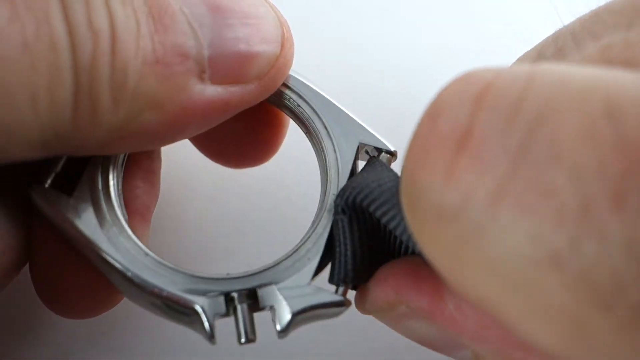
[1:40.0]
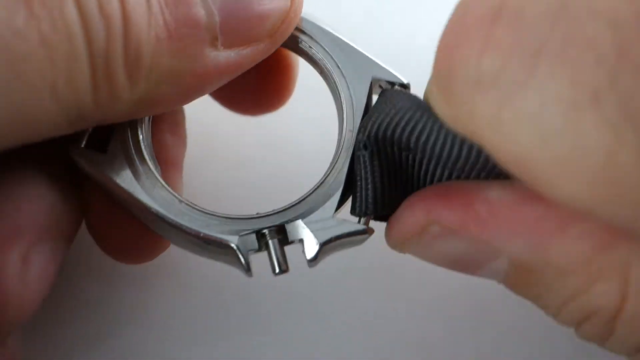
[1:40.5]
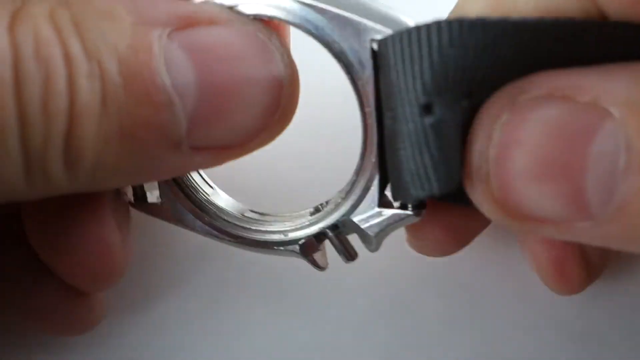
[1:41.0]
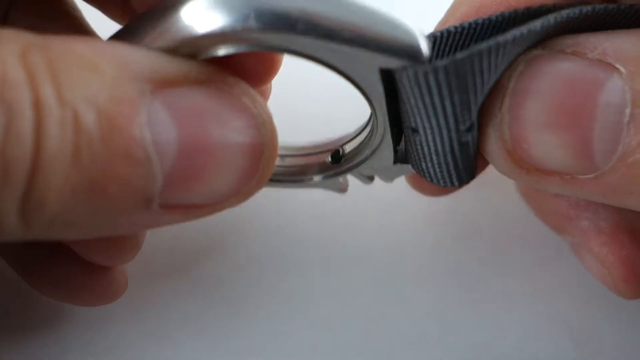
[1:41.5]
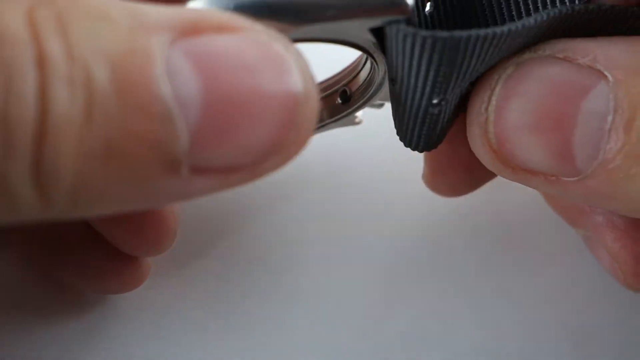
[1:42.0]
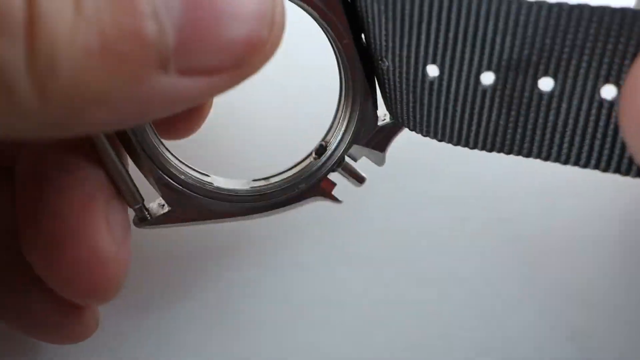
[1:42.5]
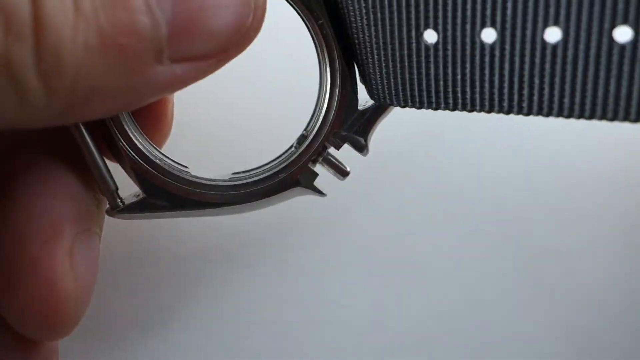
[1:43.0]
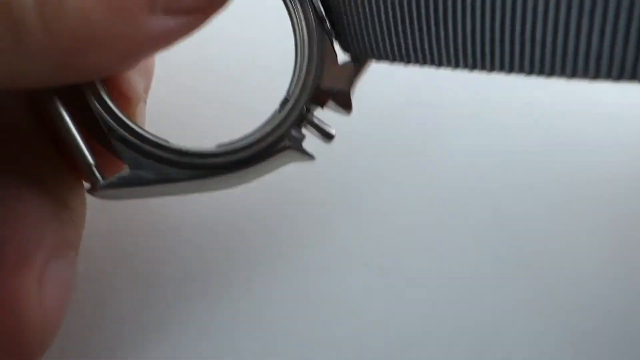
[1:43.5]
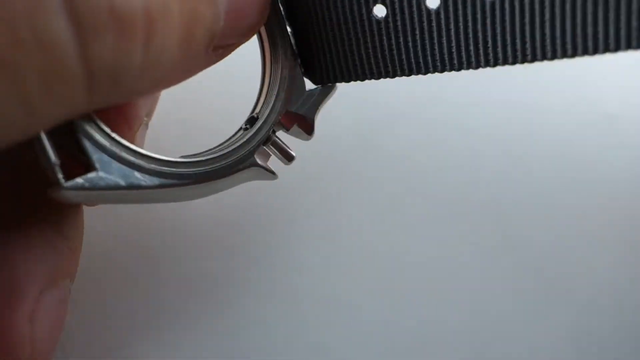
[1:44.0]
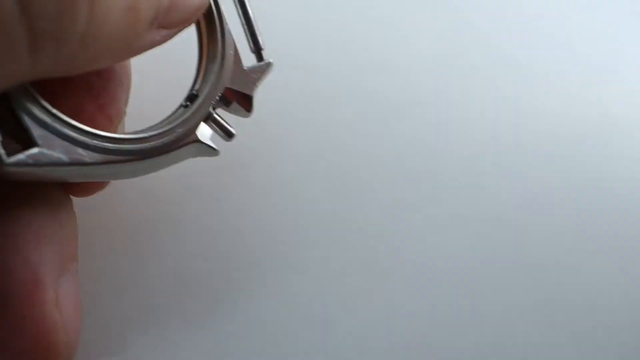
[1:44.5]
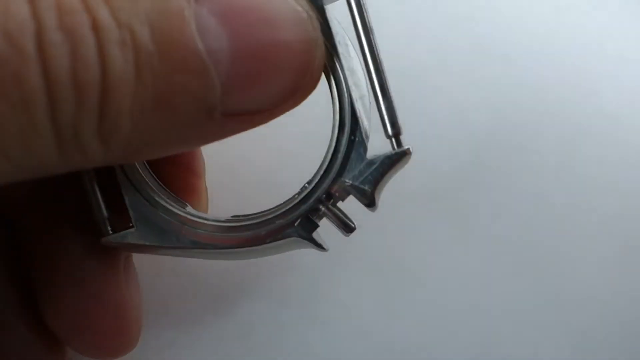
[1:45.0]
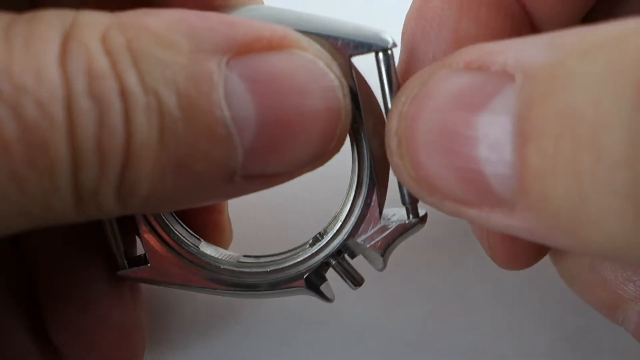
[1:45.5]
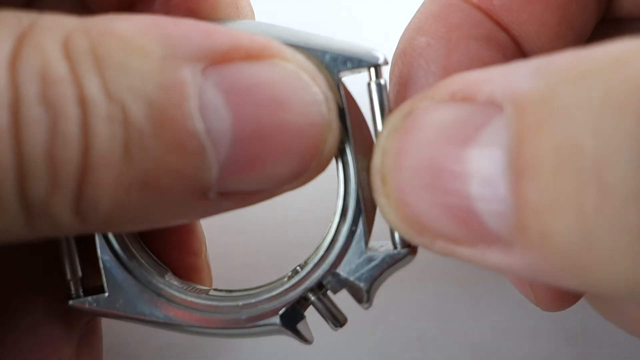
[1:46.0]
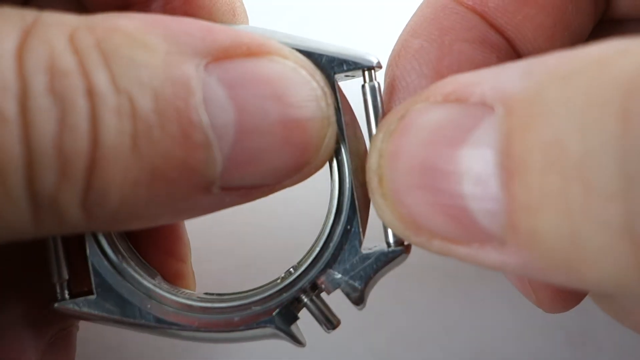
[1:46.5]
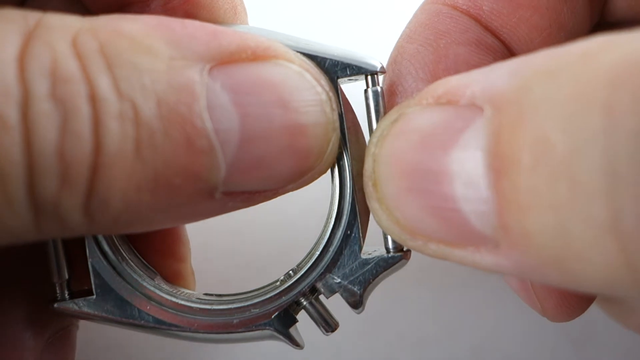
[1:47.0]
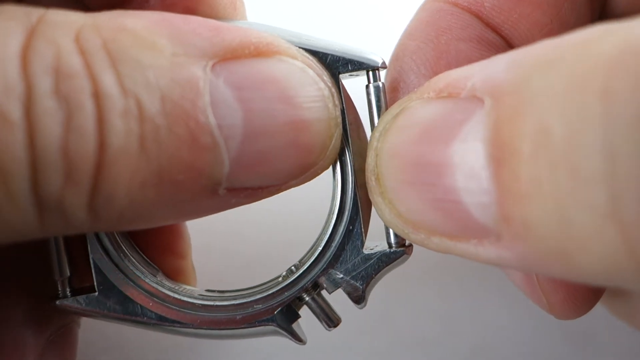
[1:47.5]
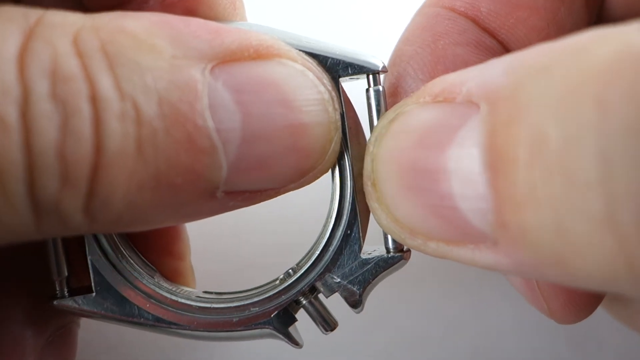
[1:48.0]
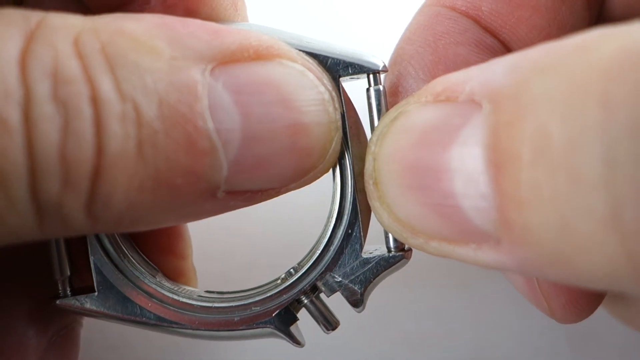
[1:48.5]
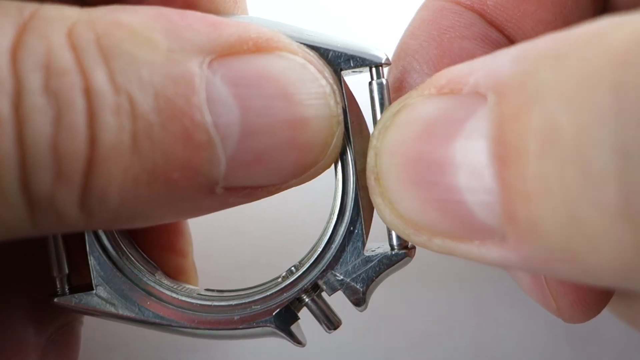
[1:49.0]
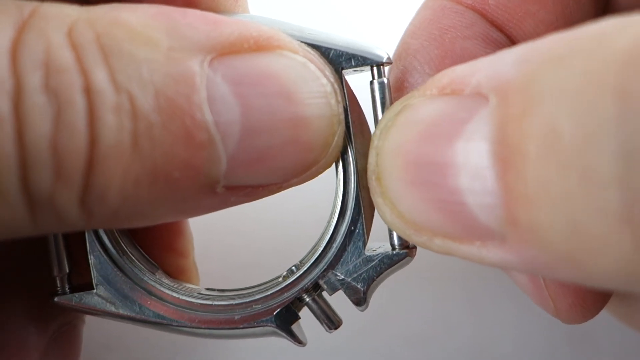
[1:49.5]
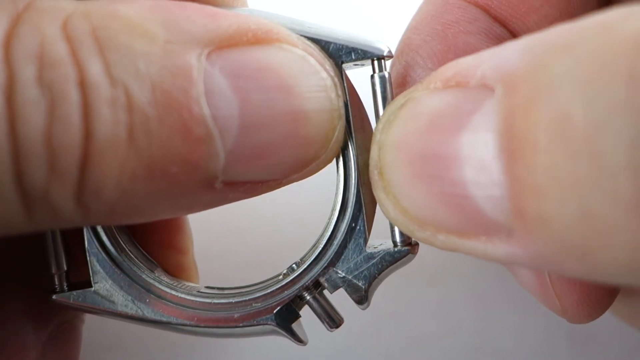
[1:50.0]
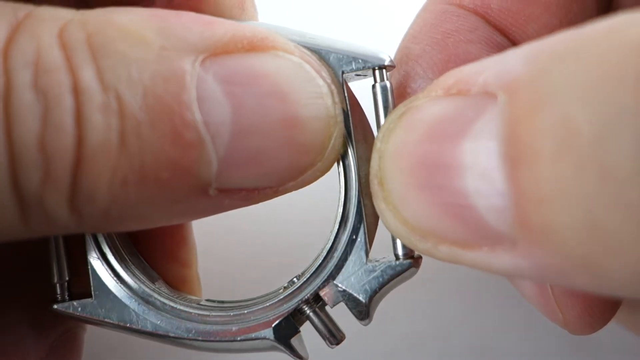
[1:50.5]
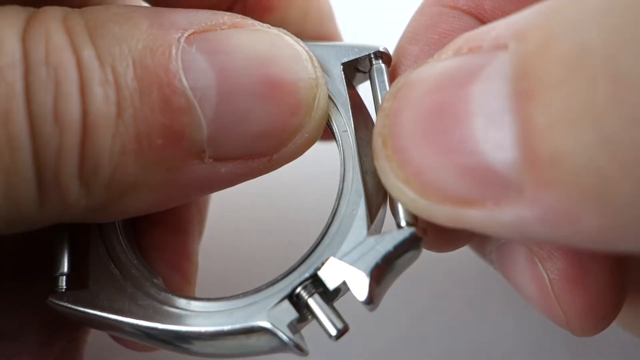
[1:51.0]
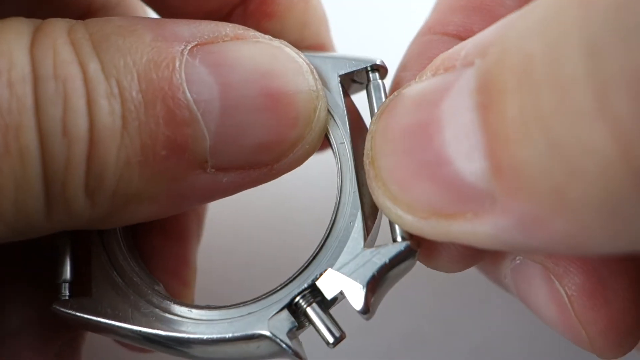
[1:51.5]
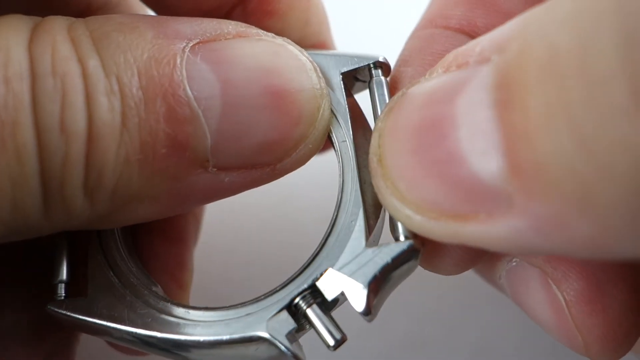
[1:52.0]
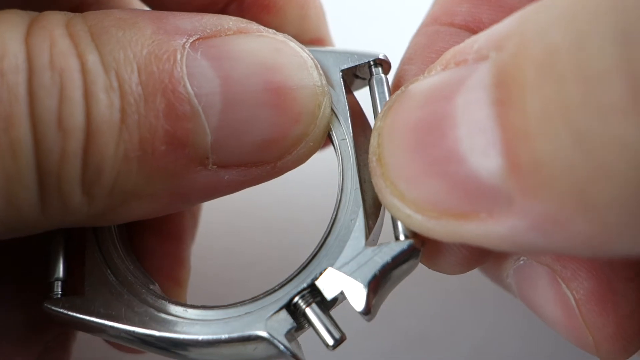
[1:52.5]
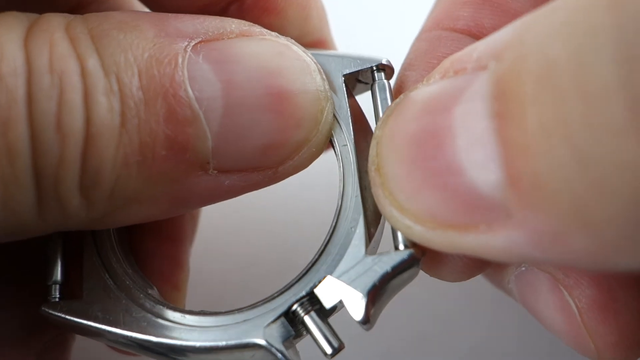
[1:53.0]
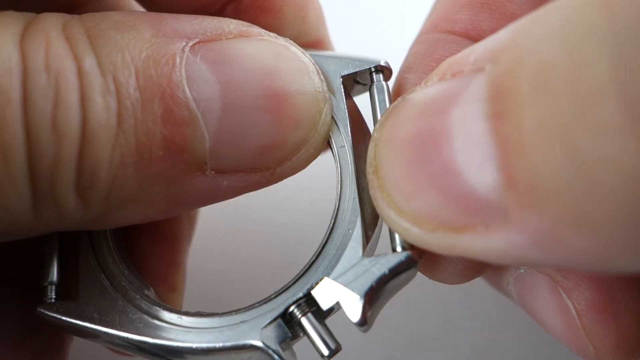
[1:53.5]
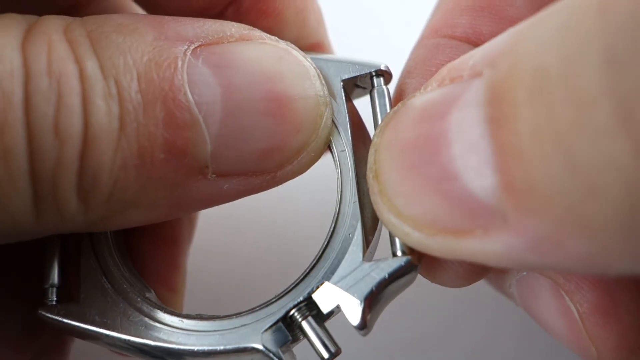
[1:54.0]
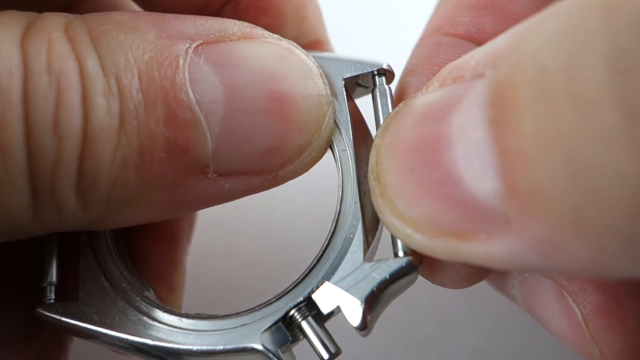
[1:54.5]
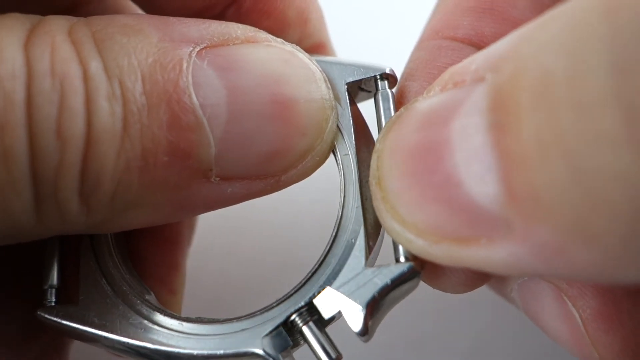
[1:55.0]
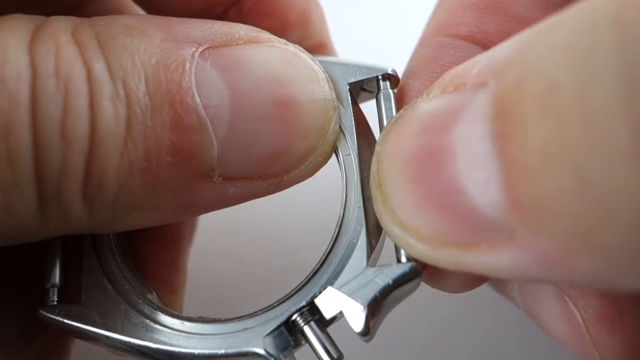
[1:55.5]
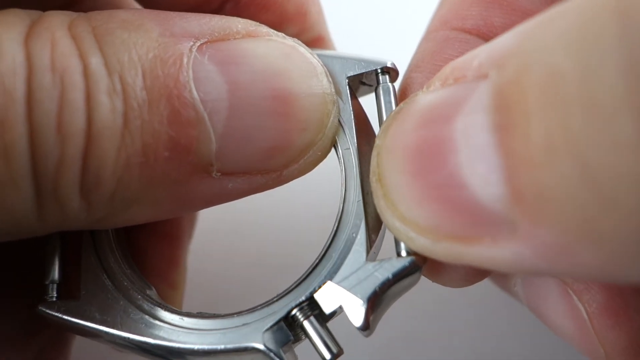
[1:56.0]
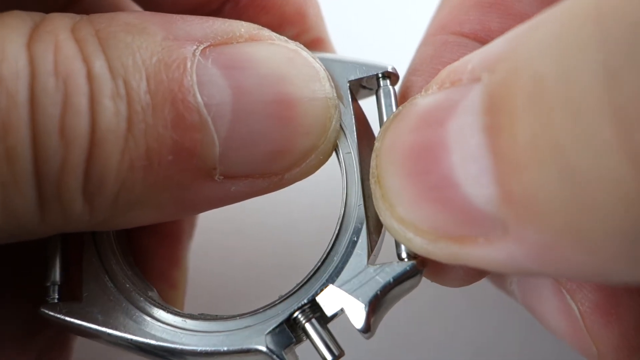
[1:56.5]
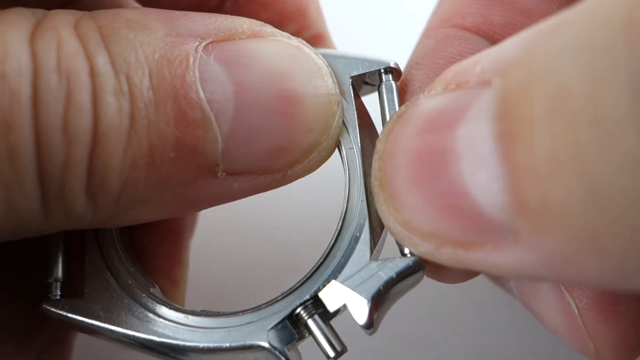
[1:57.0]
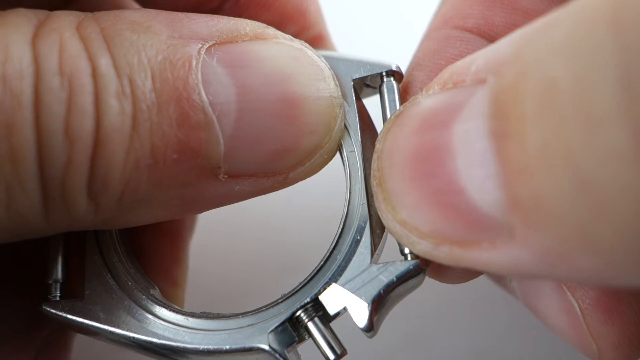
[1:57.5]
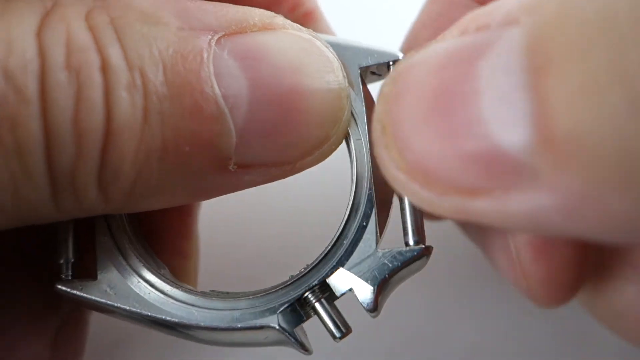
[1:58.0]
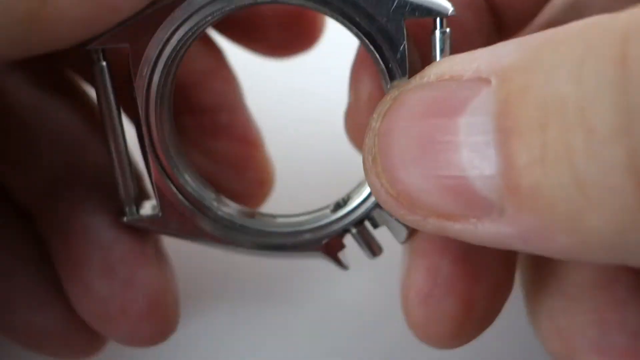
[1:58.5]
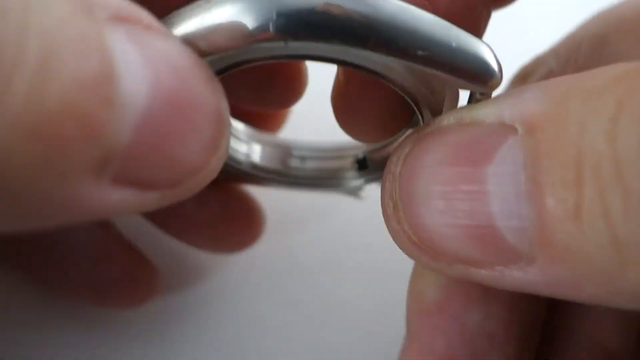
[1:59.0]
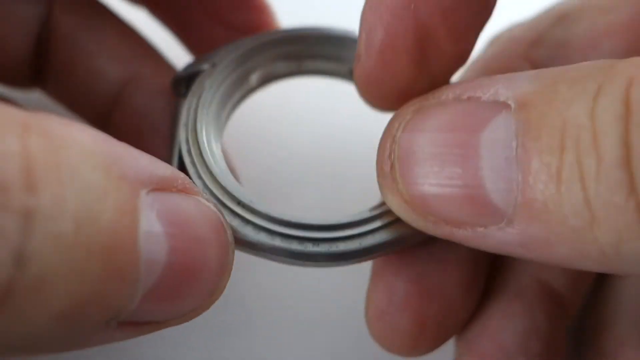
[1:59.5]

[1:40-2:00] The watch strap and watch face are angled from the top left-hand corner of the screen to the bottom right-hand corner. In the top left-hand corner, a thumb goes directly across the screen, taking up half of the left-hand side, and a close-up of a finger and knuckle appears in the bottom right-hand corner. They turn the watch face and strap horizontal across the screen, now located in the upper section. Four holes are visible in the watch strap toward the right-hand side of the screen. They pull the watch strap back out again, leaving just the watch face on the left-hand side of the screen, and pinch the section where the strap goes through with thumb and finger.